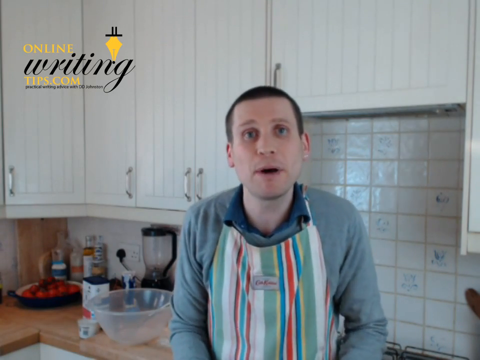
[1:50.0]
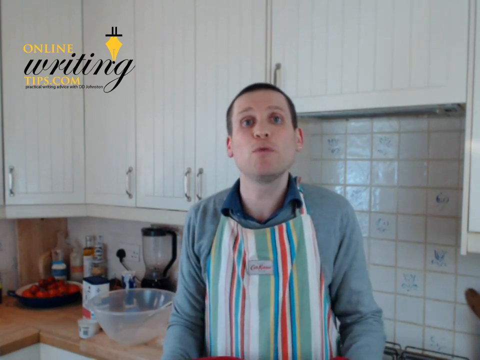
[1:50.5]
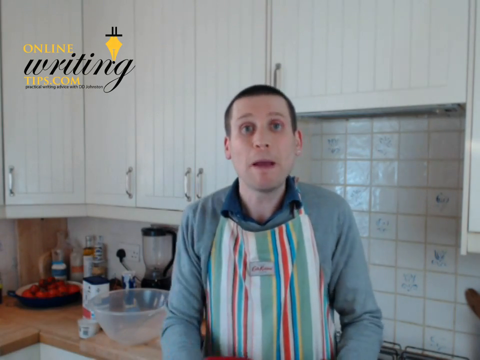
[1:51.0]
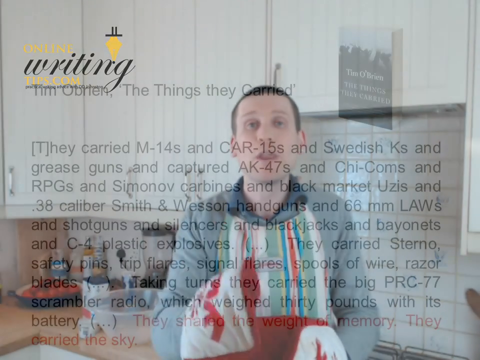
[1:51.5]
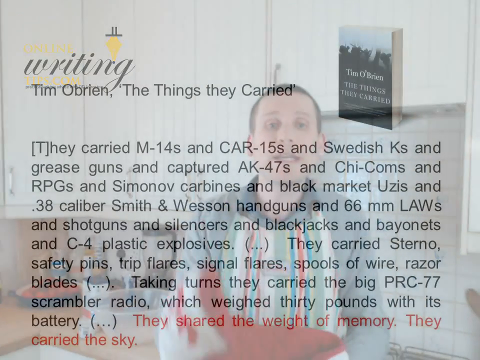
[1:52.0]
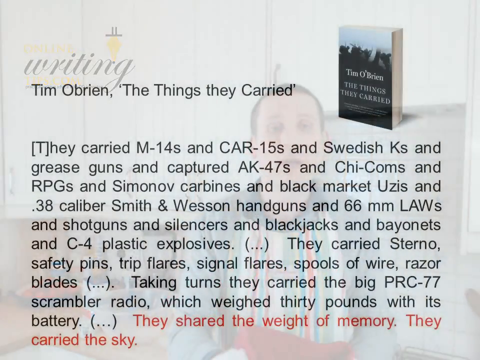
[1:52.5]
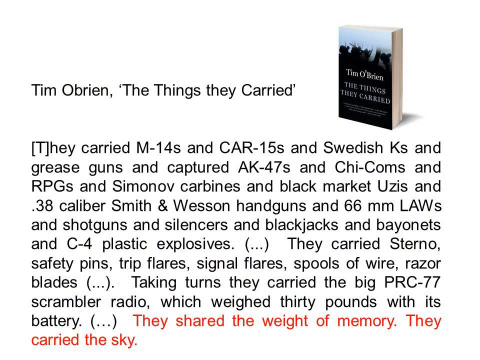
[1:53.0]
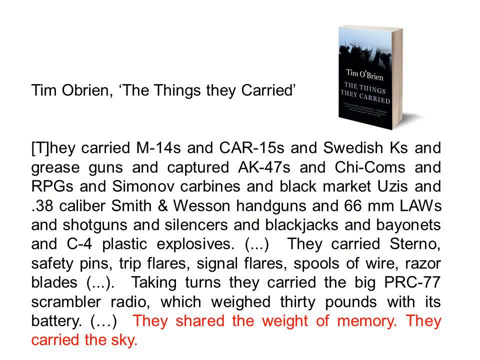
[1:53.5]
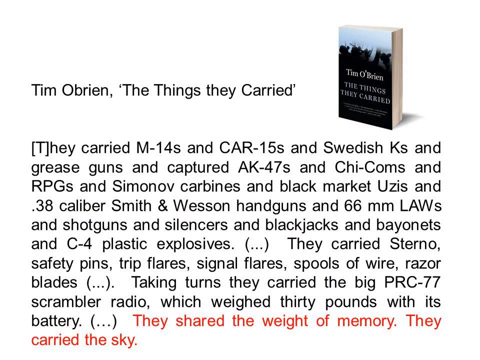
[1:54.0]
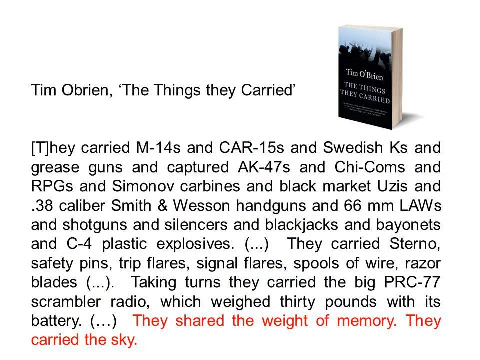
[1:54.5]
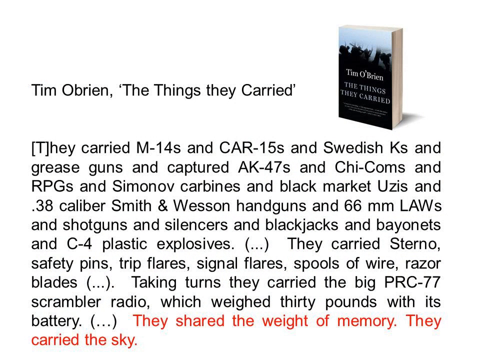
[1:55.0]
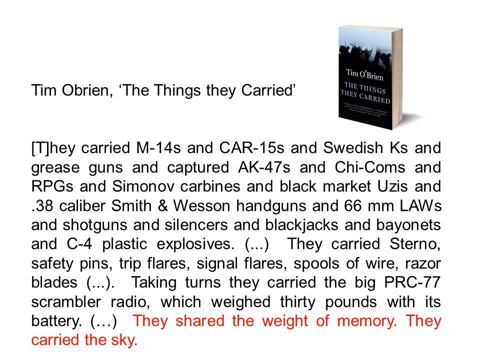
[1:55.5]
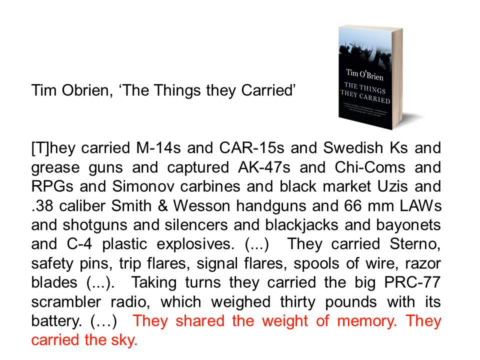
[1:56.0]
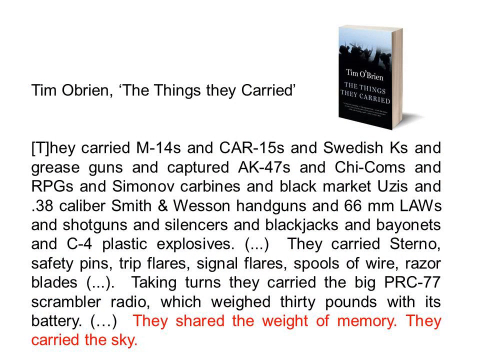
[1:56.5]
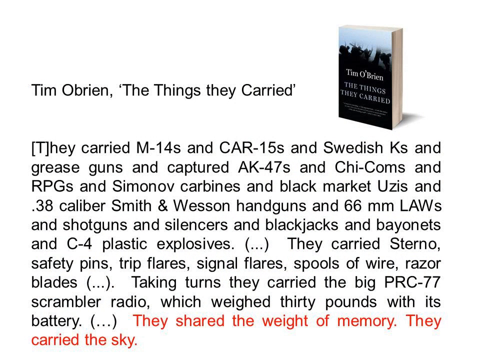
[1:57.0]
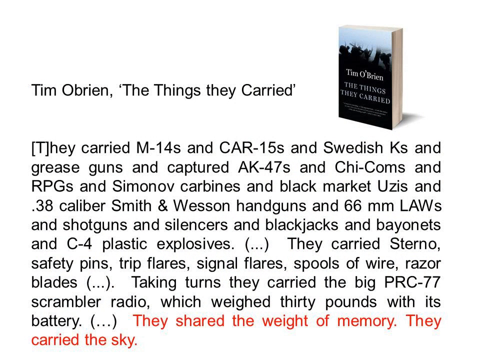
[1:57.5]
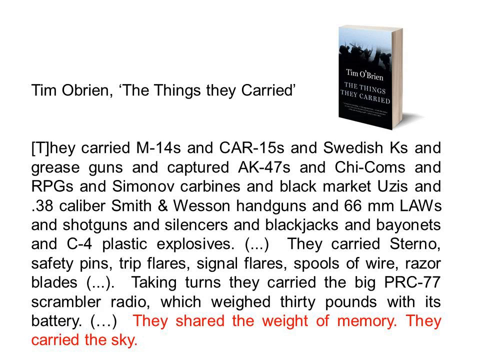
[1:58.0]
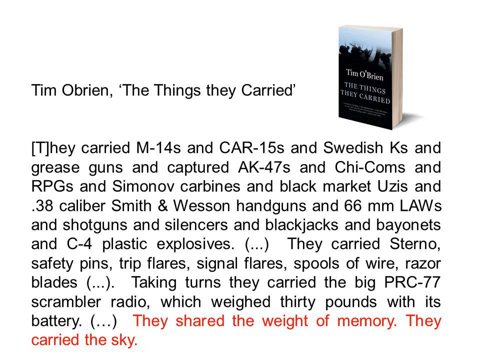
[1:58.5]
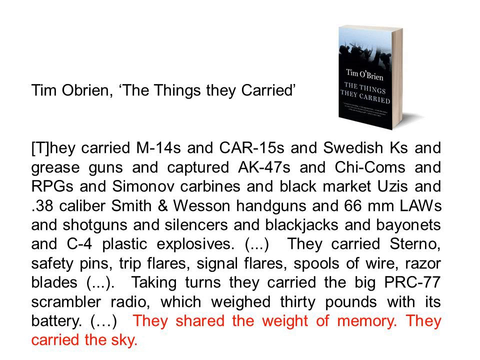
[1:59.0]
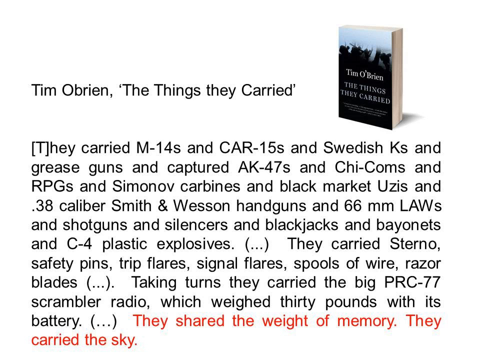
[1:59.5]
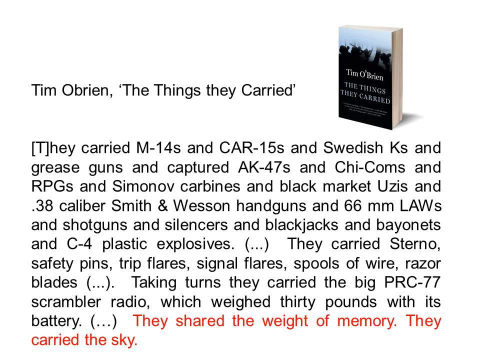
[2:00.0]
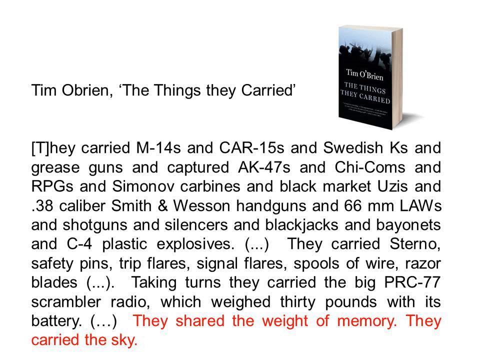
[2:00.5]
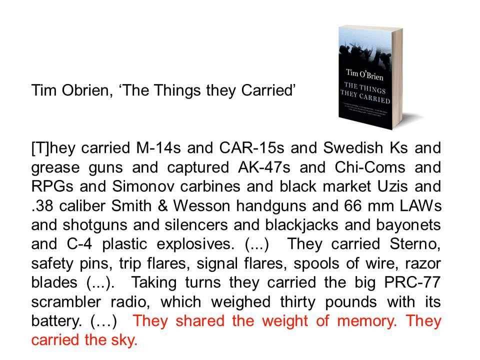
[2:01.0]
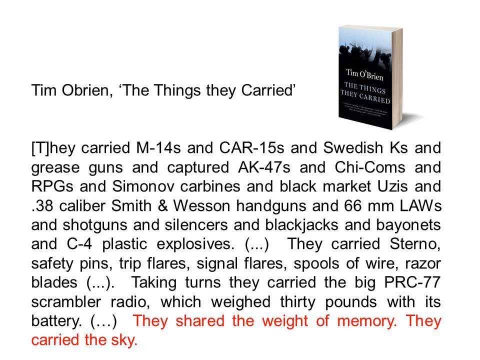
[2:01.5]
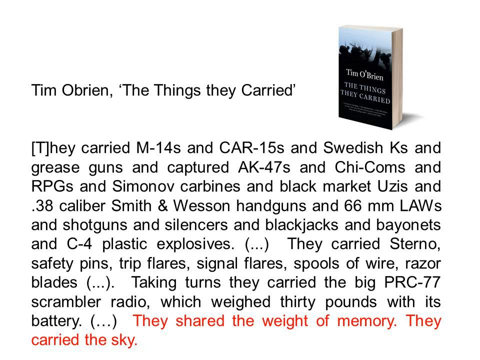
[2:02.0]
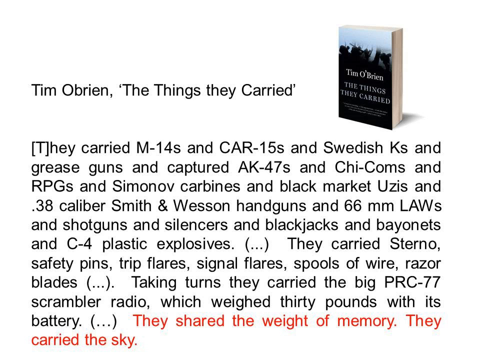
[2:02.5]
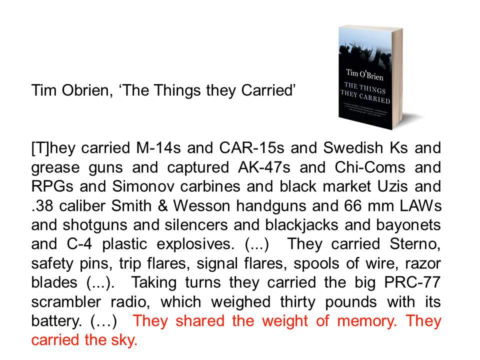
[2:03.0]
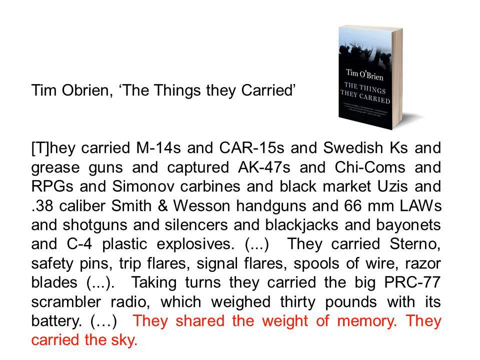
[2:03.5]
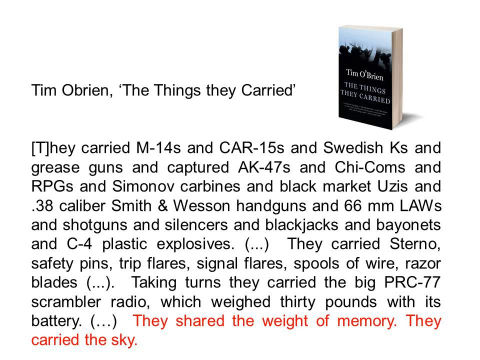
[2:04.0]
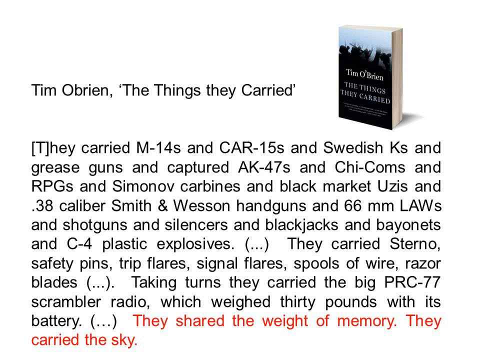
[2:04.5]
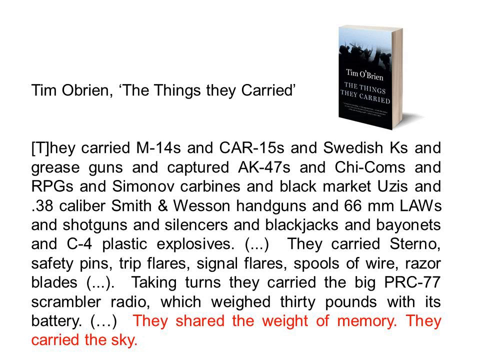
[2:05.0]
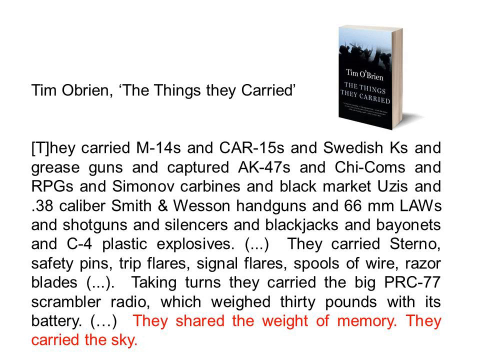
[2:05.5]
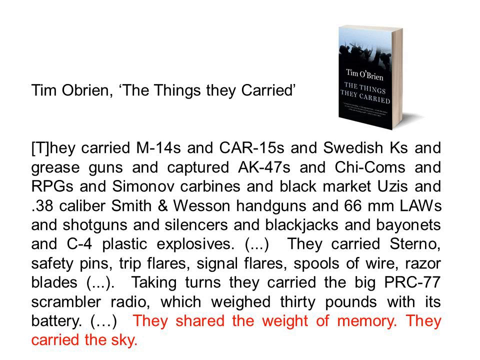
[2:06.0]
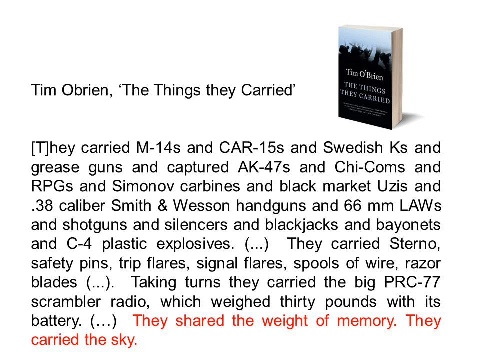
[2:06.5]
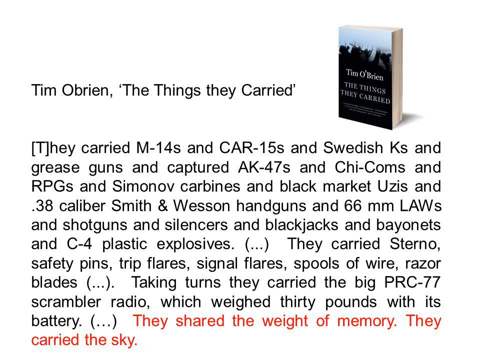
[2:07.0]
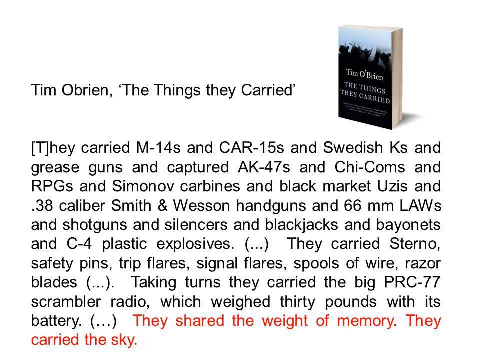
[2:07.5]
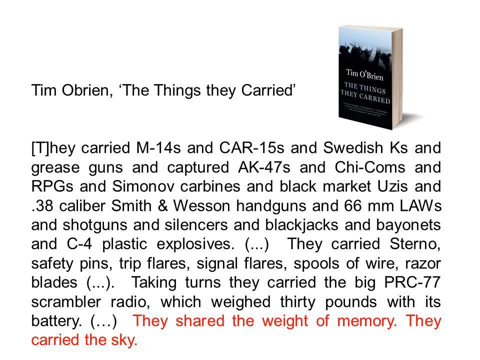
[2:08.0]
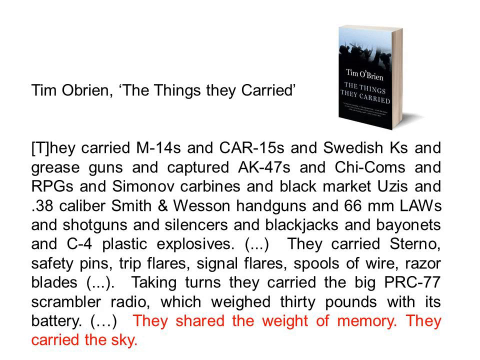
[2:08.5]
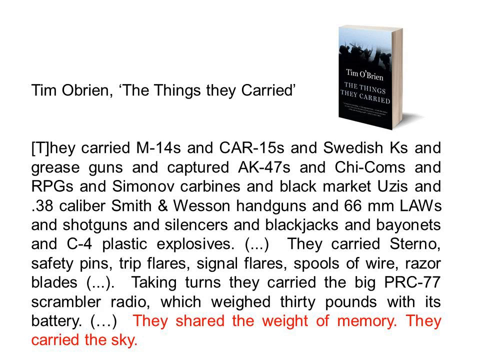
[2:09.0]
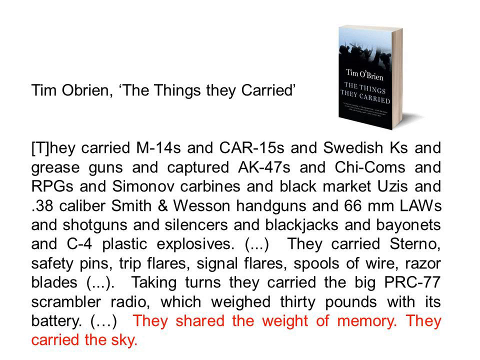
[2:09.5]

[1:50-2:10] The man is in the kitchen in a gray shirt and striped apron, wearing red oven mitts. The scene then changes over to a white background with a book in the top right corner that says "Tim O'Brien, The Things They Carried", and the same is listed next to it. The text beneath says "They Carried M-14s, and CAR-15s, and Swedish Ks, and Grease Guns, and Captured AK-47s, and Chi-Coms, and RPGs, and Simonov Carbines, and Black Market Uzis, and .38 caliber Smith & Wesson Handguns, and 66mm Laws, and Shotguns, and Silencers, and Black Jacks, and Bayonets, and C-4 Plastic Explosives. They Carried Sterno Safety Pins, Trip Flares, Signal Flares, Spools of Wire, Razor Blades. Taking turns, they carried the big PRC-77 Scrambler Radio, which weighed 30 pounds with its battery." Additional text says "They Shared the Weight of Memory, They Carried the Sky."